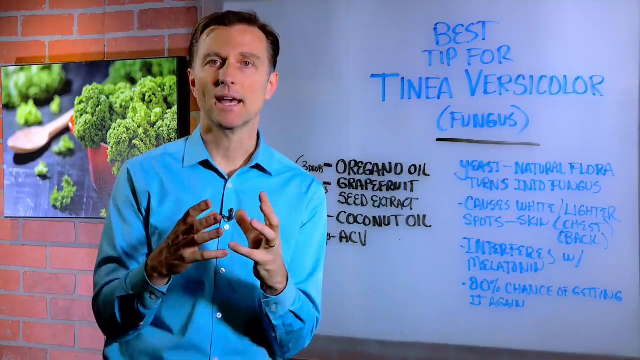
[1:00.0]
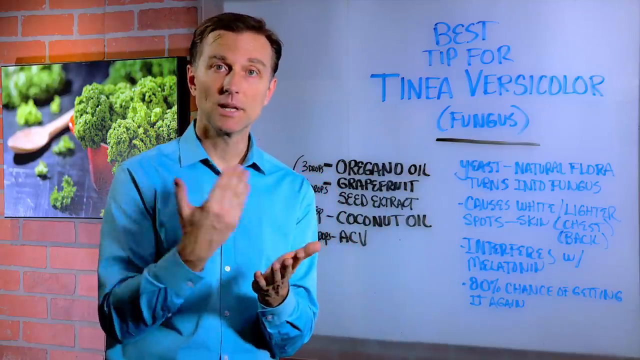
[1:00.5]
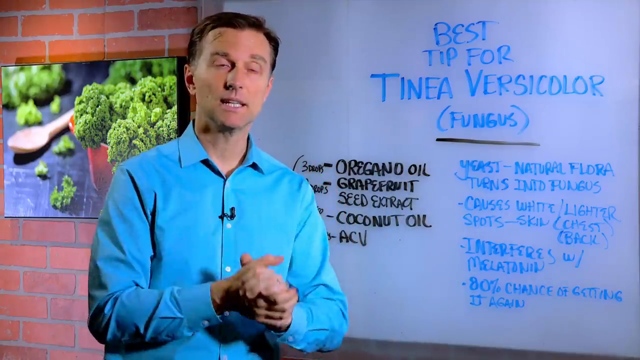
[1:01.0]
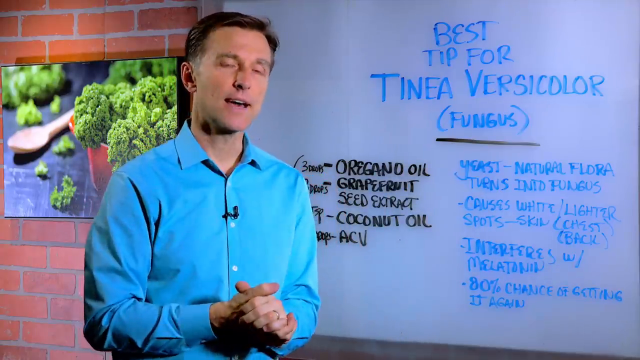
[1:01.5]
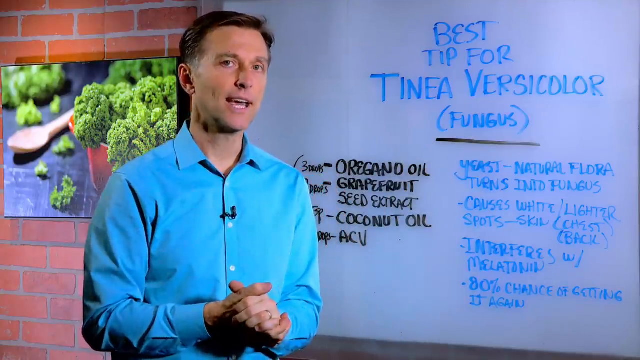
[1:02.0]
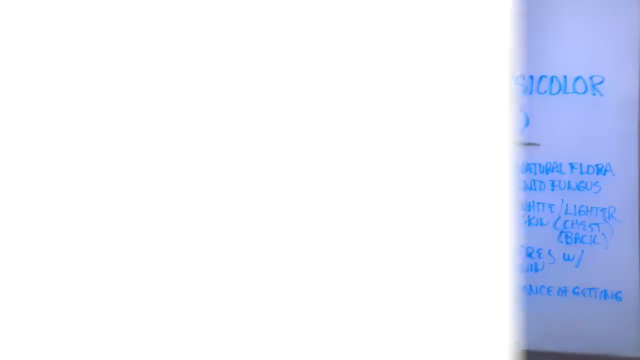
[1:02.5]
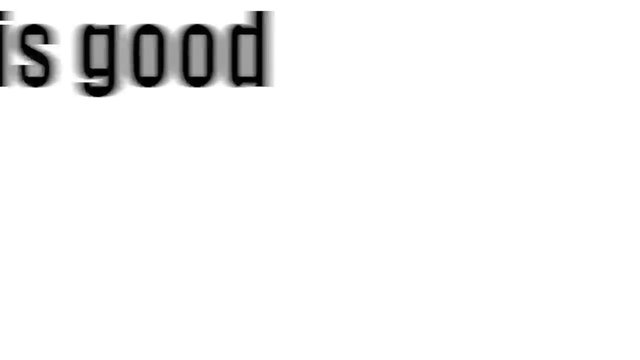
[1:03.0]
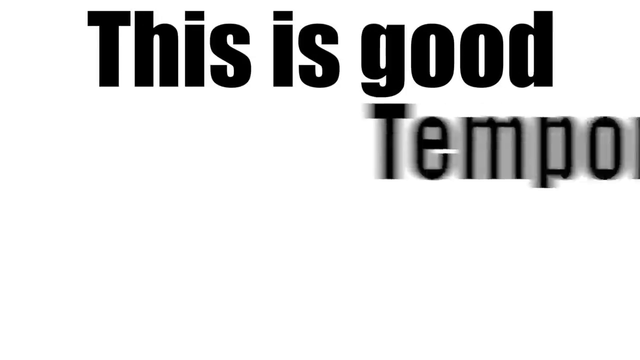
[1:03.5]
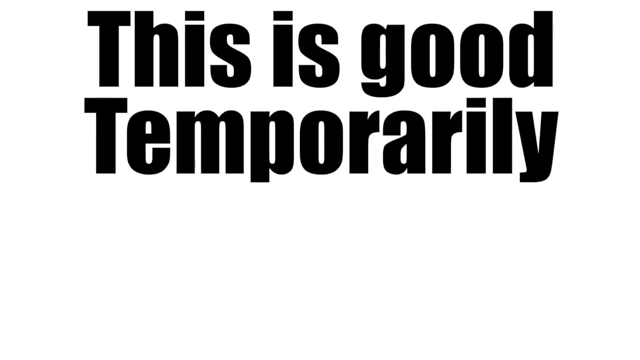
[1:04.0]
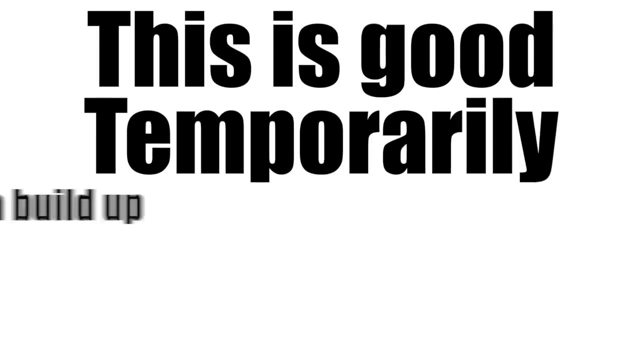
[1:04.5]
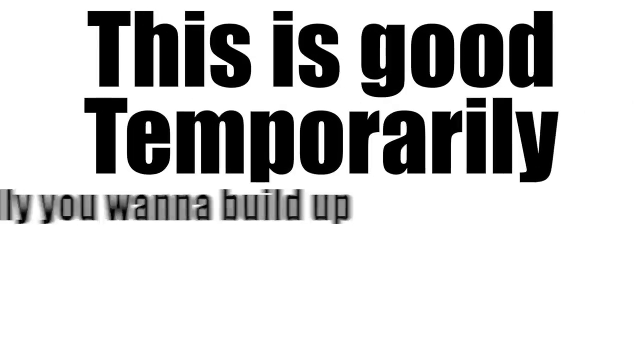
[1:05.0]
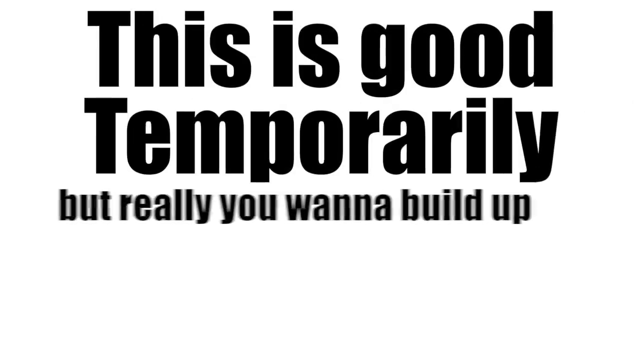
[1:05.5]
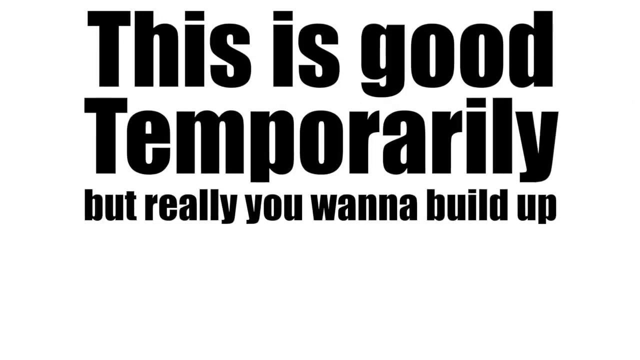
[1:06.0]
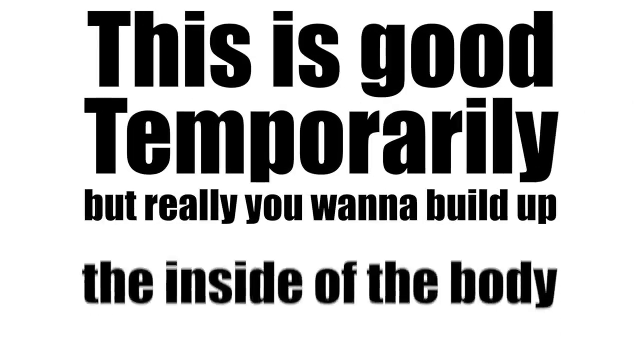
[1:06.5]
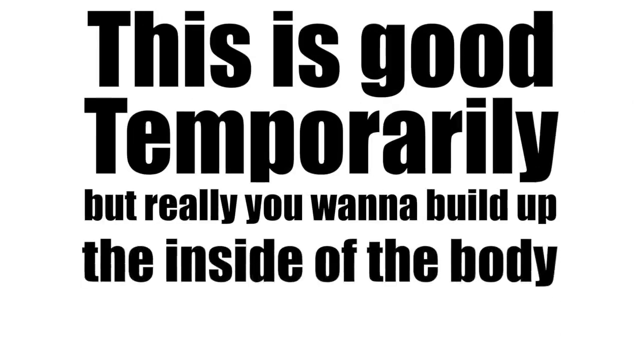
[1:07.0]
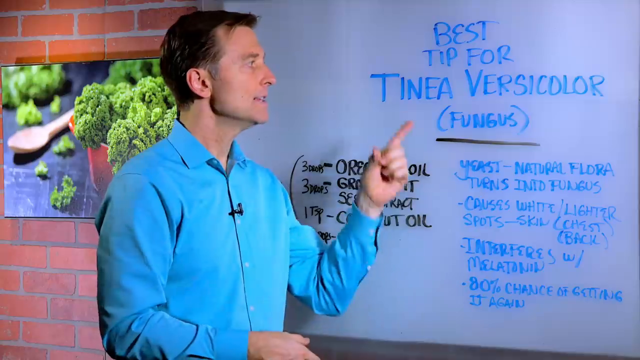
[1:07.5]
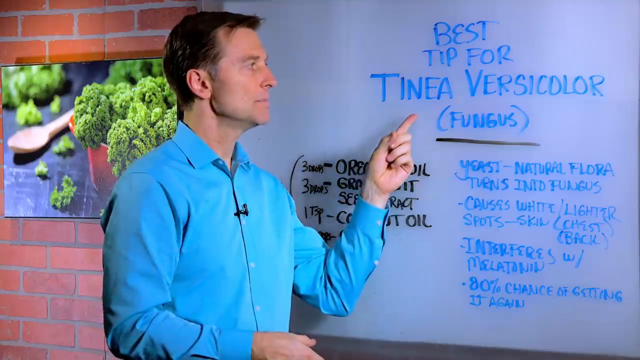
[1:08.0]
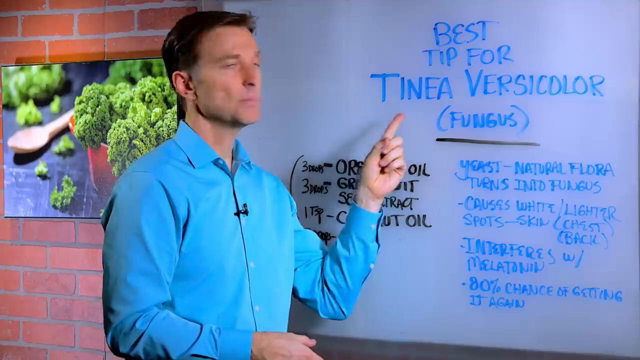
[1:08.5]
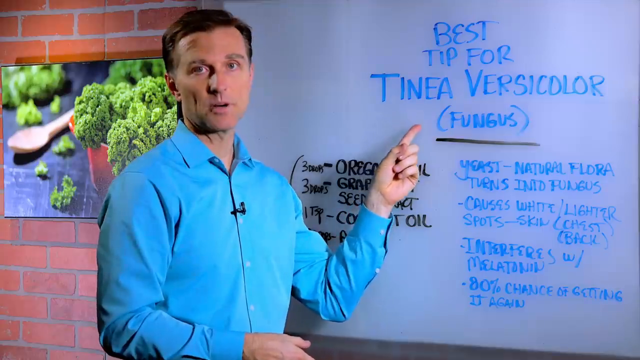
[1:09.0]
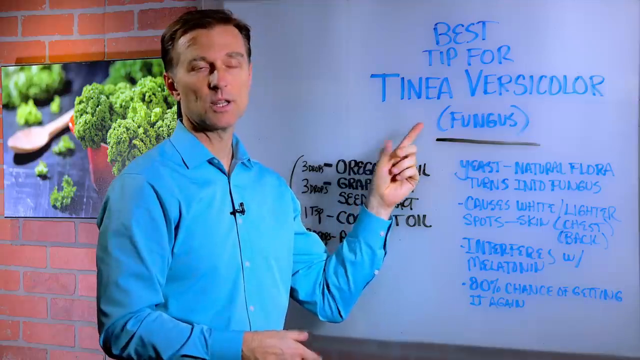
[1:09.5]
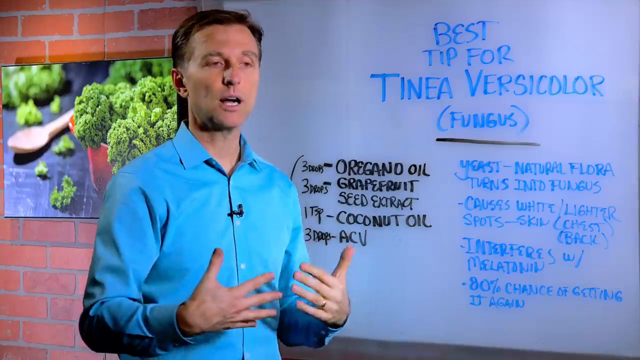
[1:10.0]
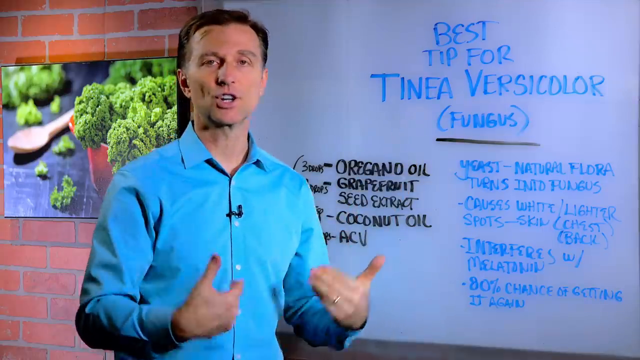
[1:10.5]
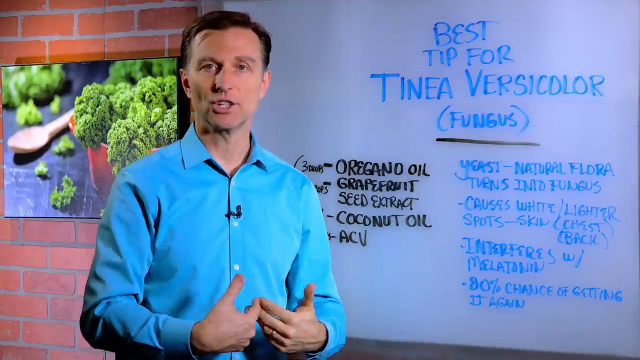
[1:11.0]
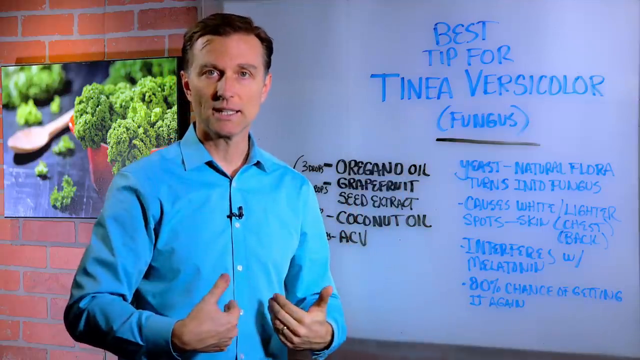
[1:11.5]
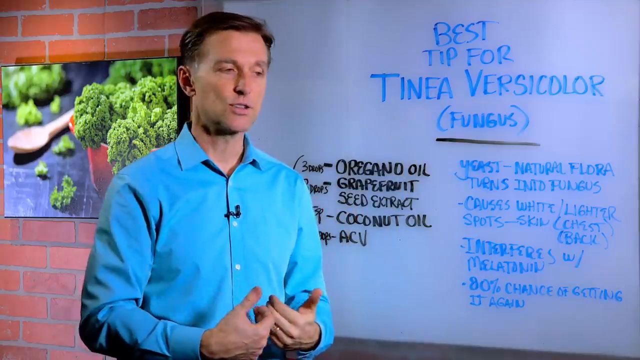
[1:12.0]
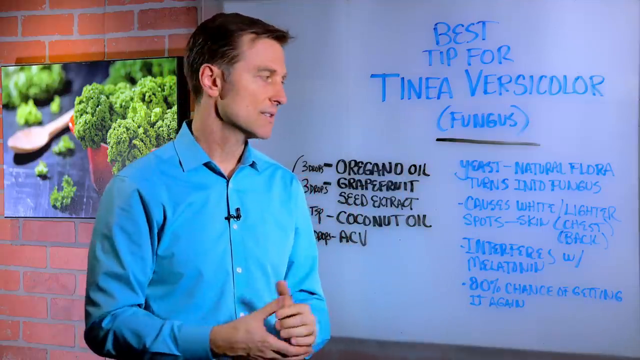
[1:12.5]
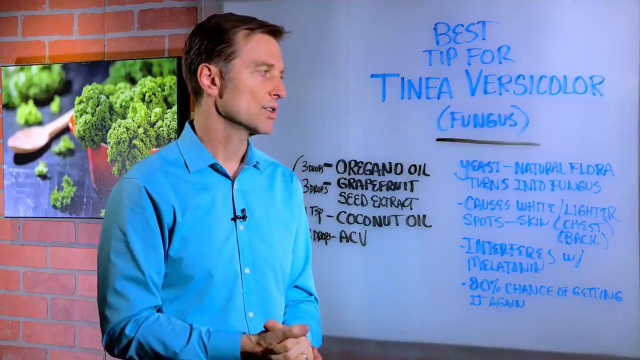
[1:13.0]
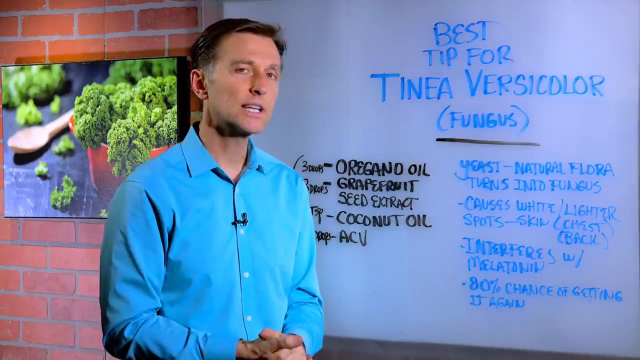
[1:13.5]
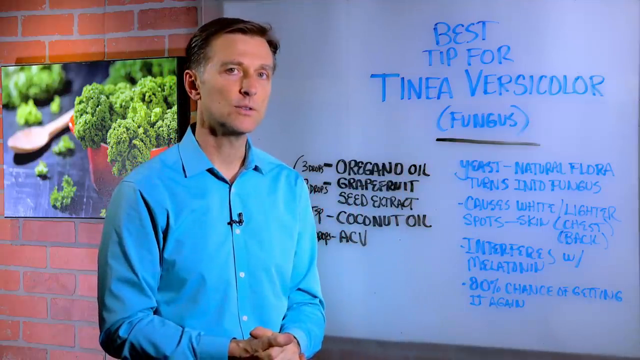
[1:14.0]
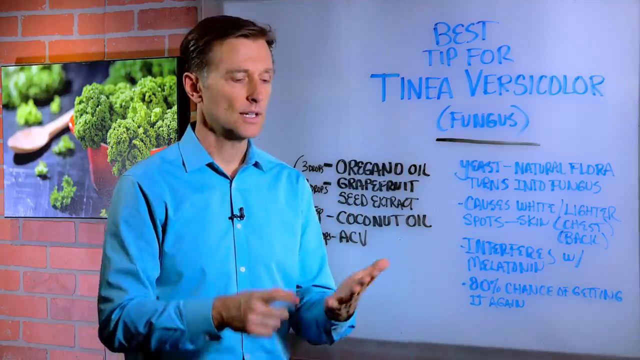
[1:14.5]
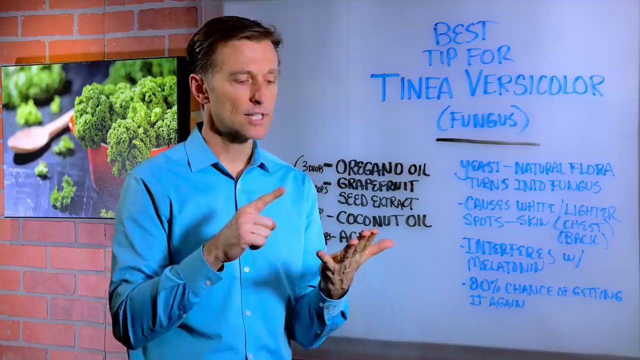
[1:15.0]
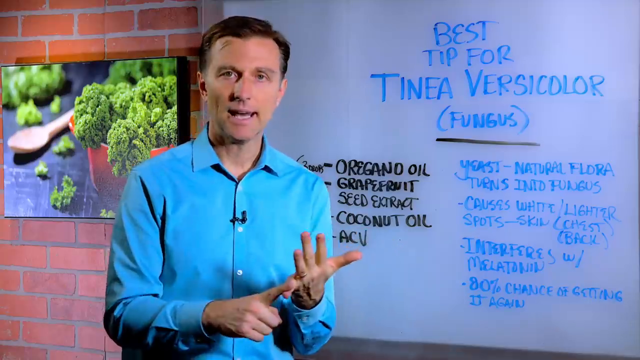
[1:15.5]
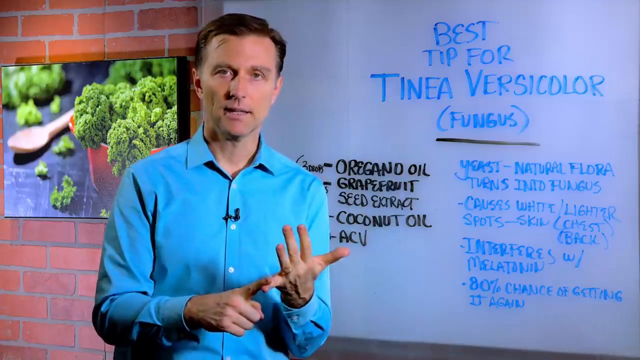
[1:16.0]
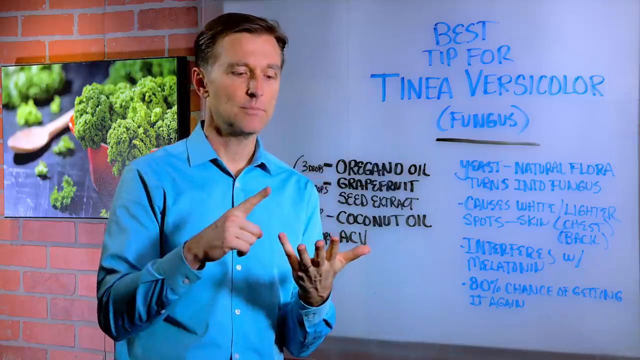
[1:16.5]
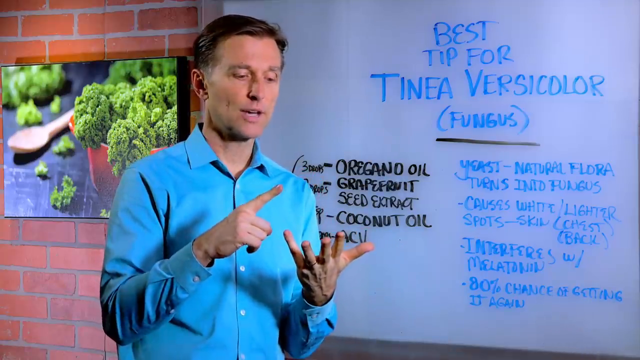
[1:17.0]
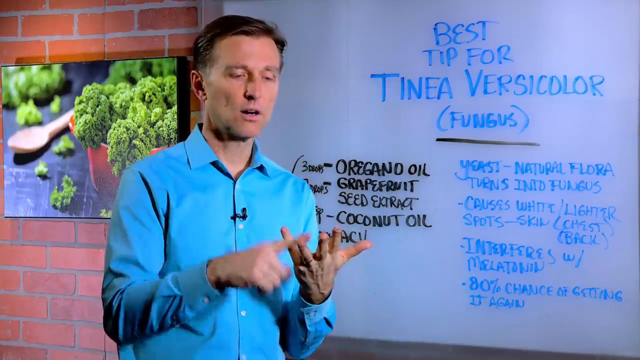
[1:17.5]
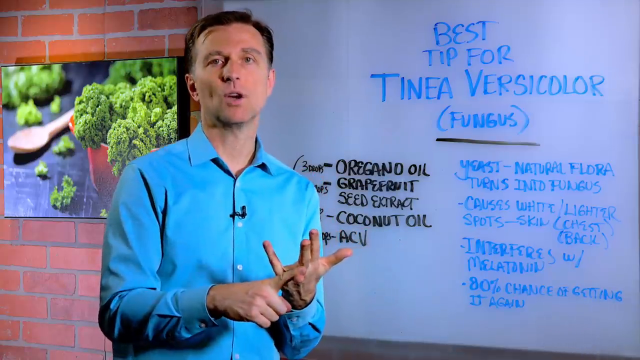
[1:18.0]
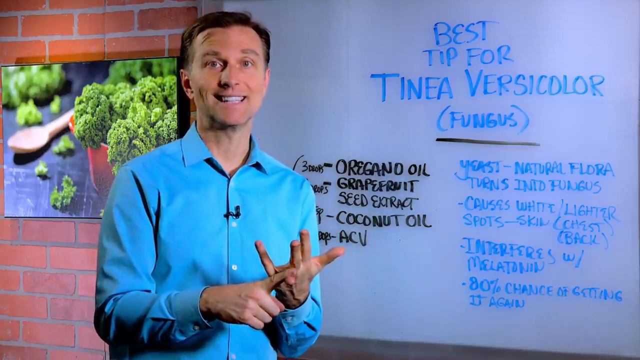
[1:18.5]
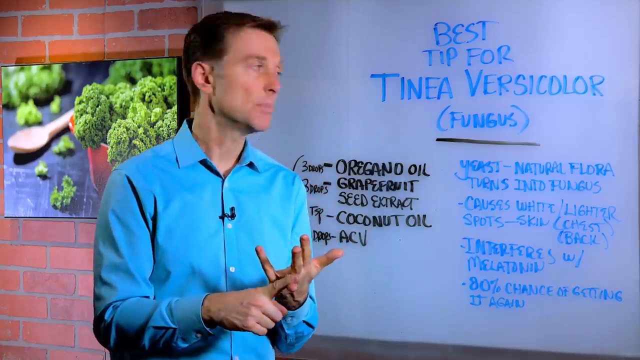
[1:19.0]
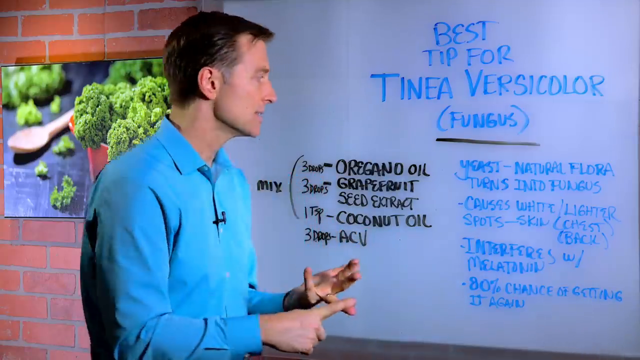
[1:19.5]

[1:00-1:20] The man finishes speaking and a fade transition leads to a white background with big bold black text that says "this is good temporarily", sweeping in from each side, followed by slightly smaller text: "but really you want to build up the inside of the body". The text appears and disappears very quickly. The video returns to the man, who taps the board and points to the blue words tinea vesicular above the word fungus. He goes back to explaining, pointing toward his body, and then uses one hand against the other as if counting, grabbing one finger at a time.